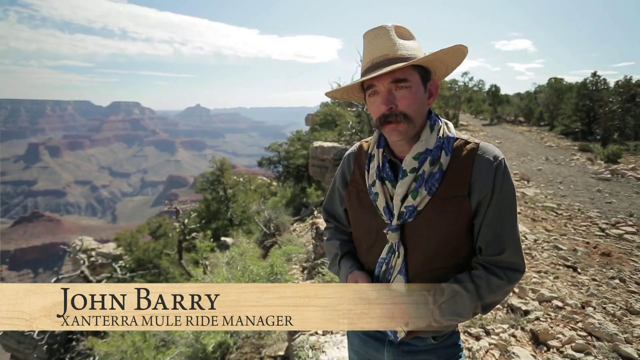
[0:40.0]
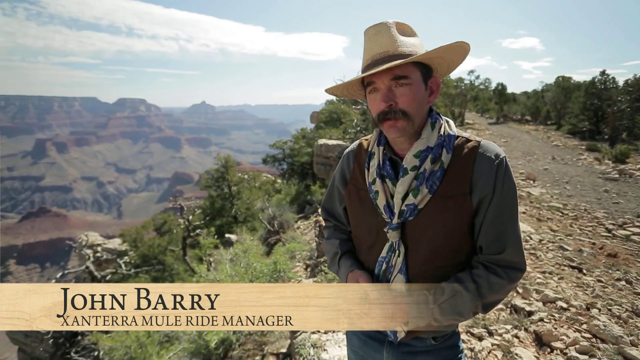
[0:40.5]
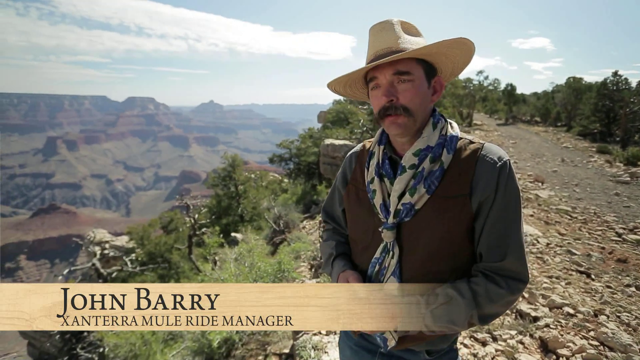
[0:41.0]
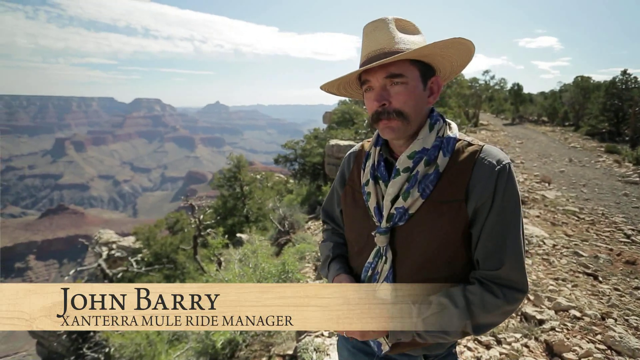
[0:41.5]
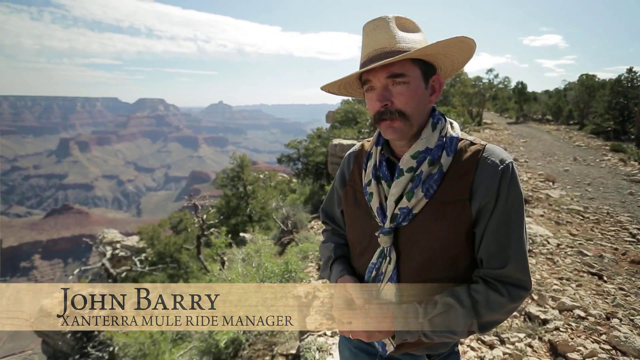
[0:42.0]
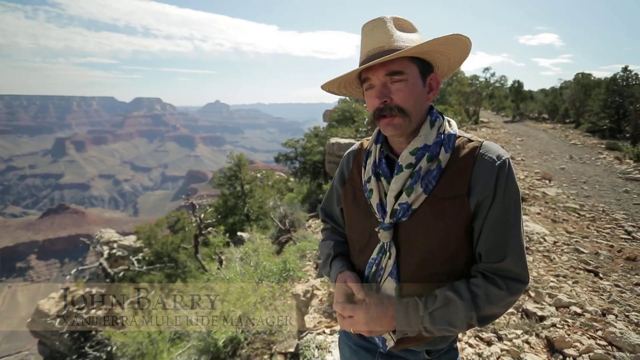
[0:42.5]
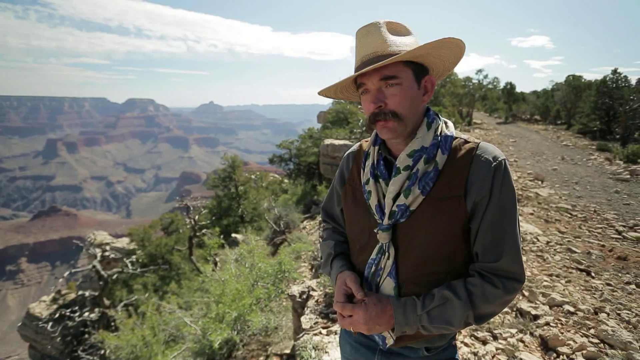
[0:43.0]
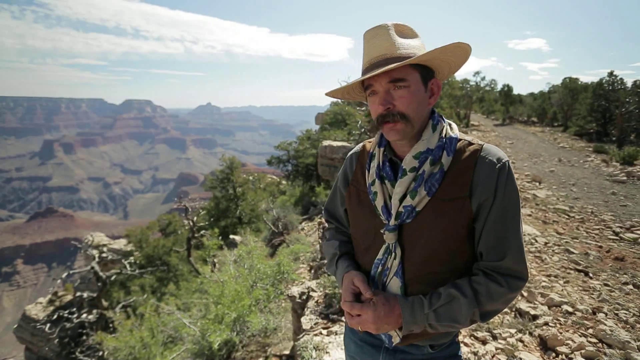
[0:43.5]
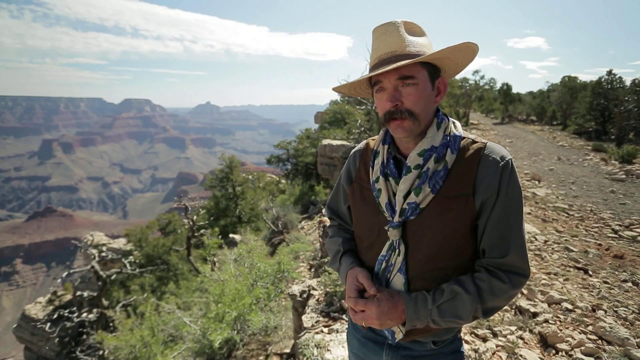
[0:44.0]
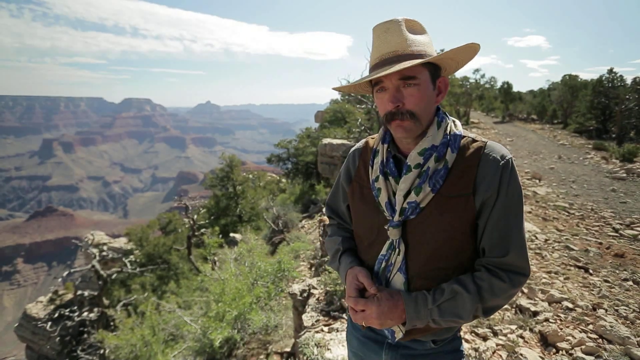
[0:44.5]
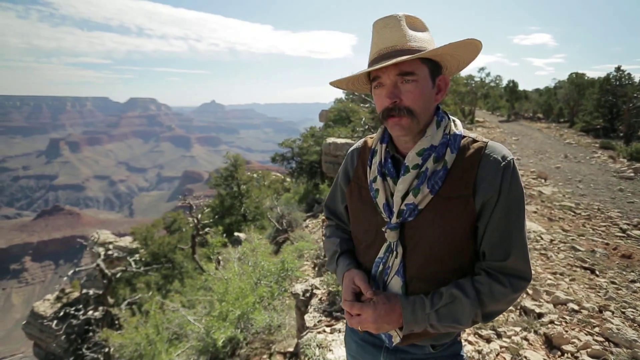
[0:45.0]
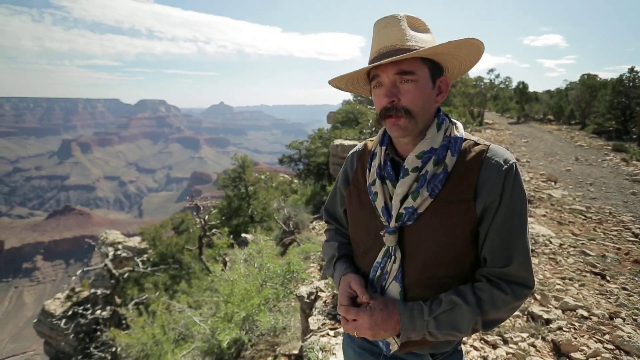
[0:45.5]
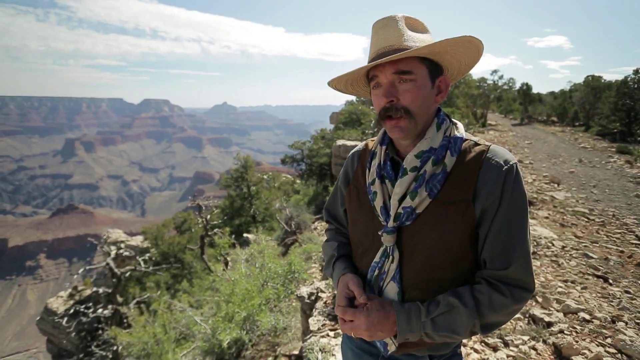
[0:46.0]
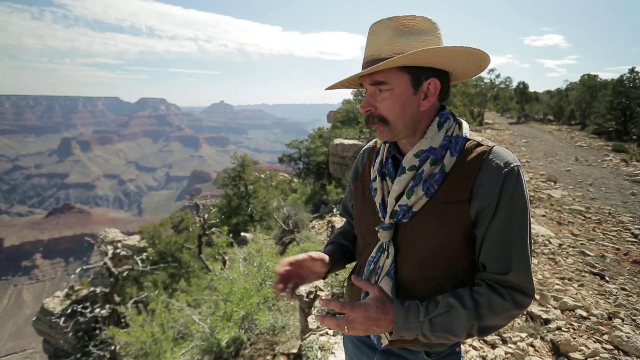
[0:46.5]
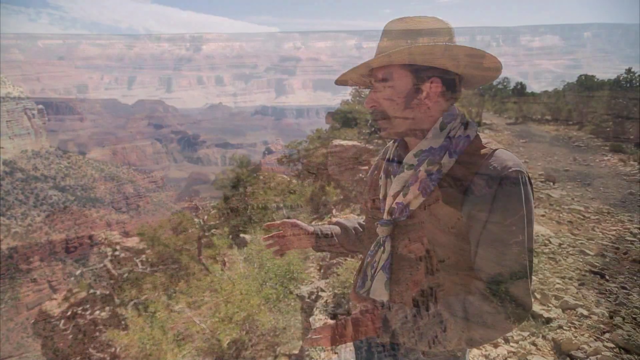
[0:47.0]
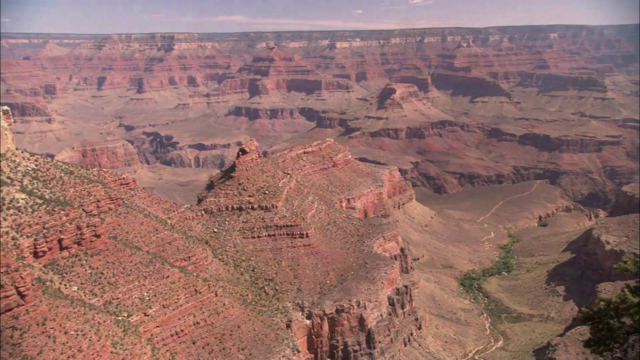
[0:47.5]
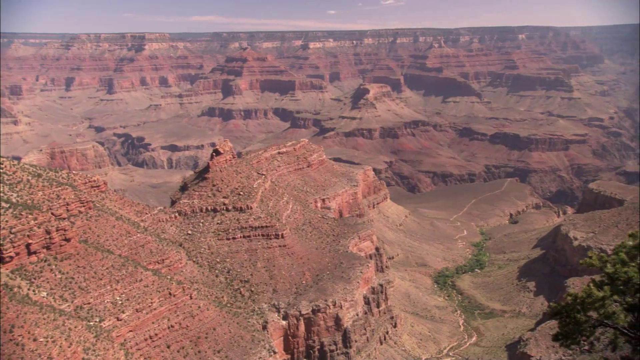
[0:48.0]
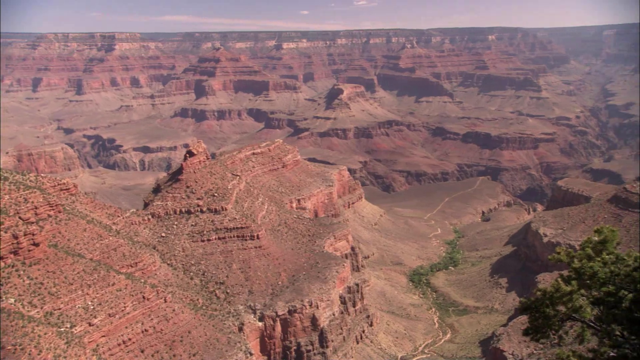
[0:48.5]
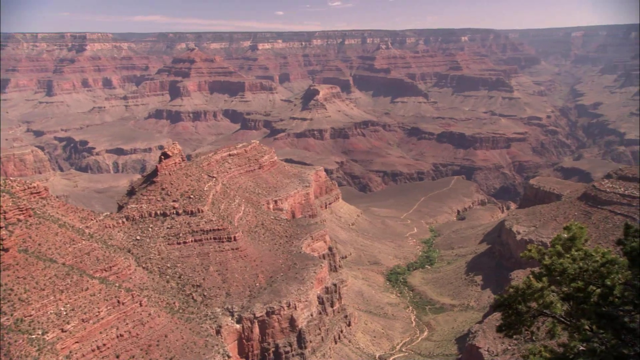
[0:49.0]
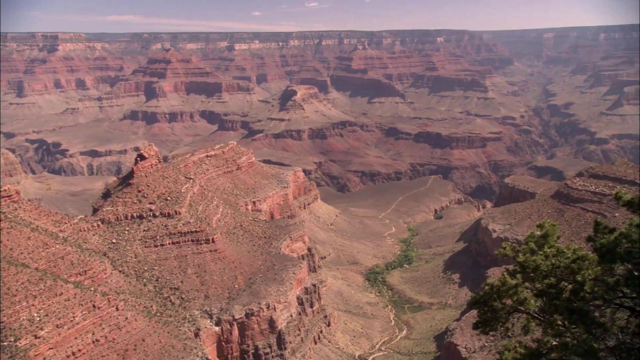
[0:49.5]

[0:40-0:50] John Leary, a newly hired manager, talks while wearing a cowboy hat. He is the only one speaking, and he keeps pointing at certain points of the area, apparently explaining them.